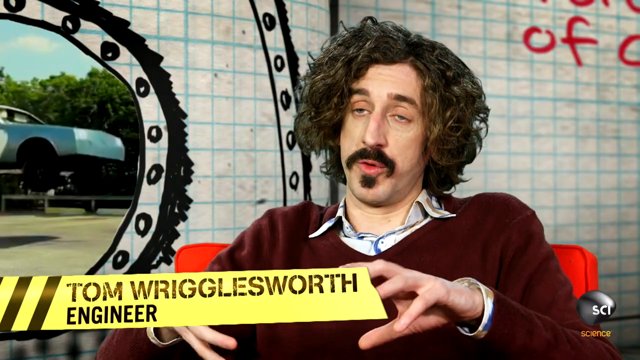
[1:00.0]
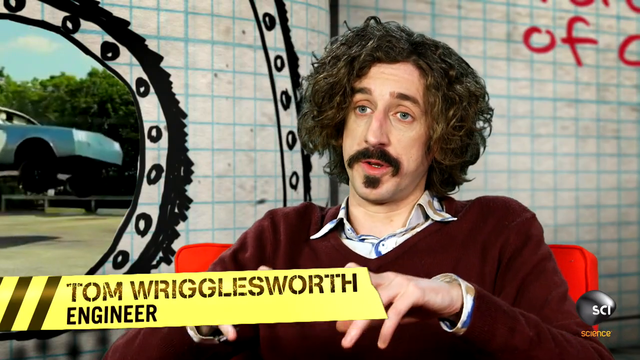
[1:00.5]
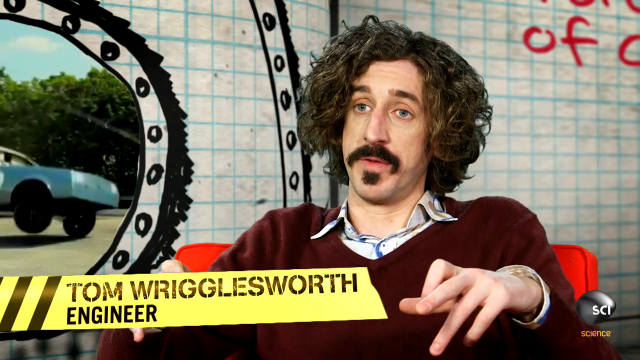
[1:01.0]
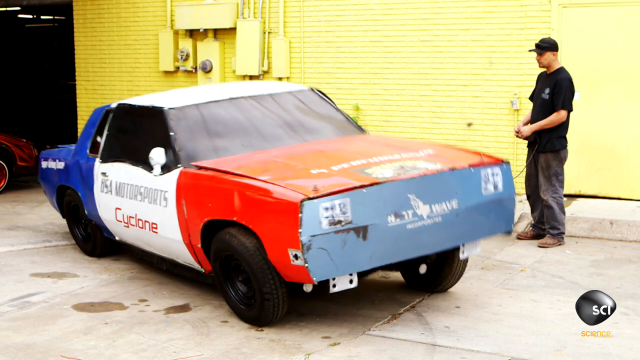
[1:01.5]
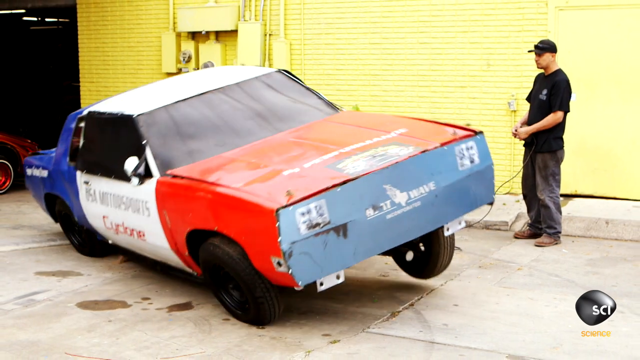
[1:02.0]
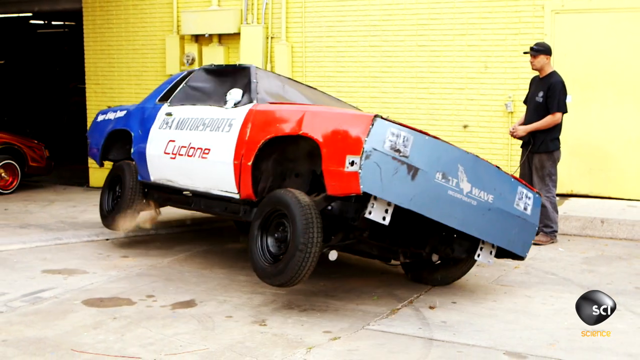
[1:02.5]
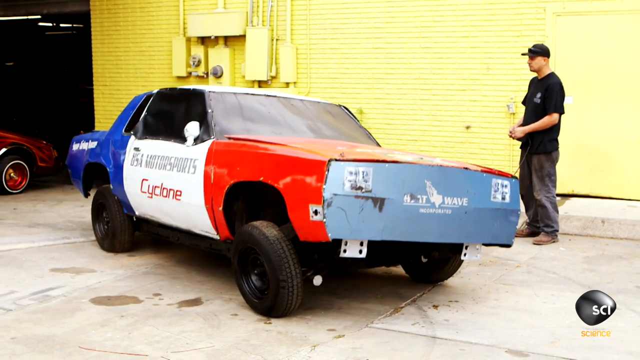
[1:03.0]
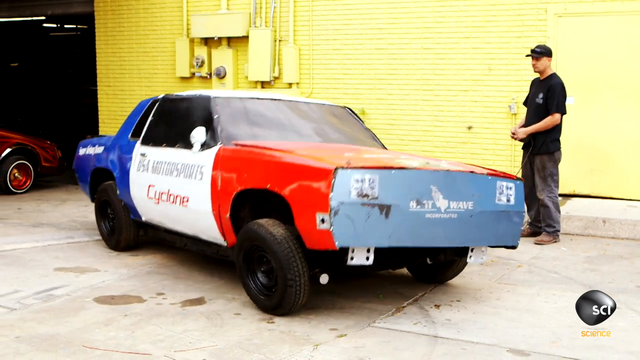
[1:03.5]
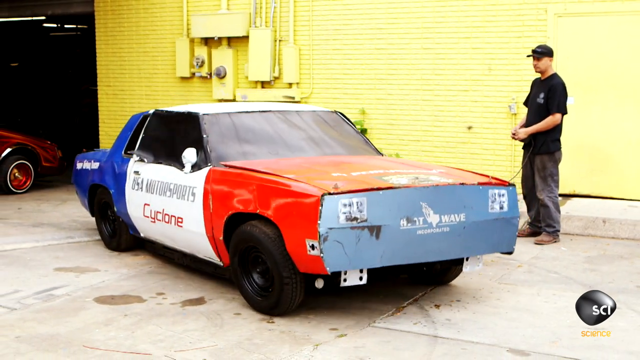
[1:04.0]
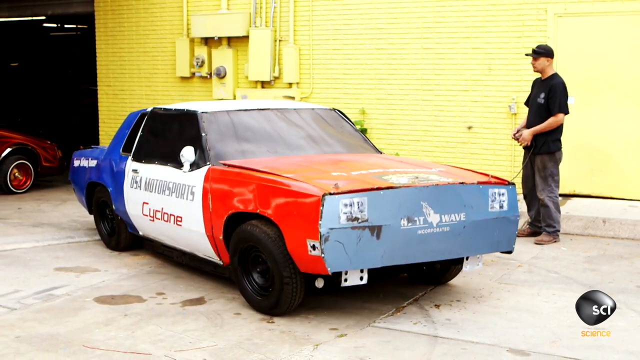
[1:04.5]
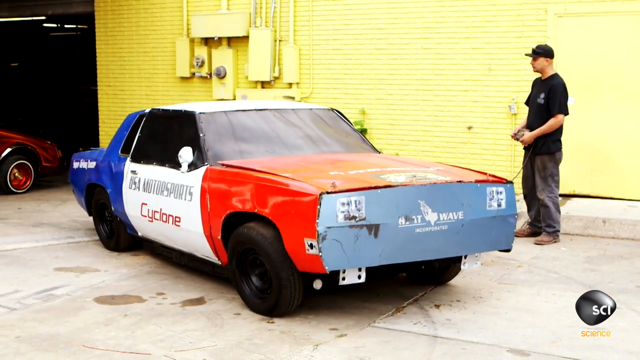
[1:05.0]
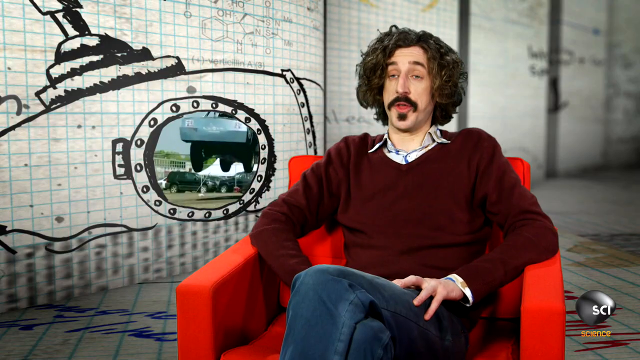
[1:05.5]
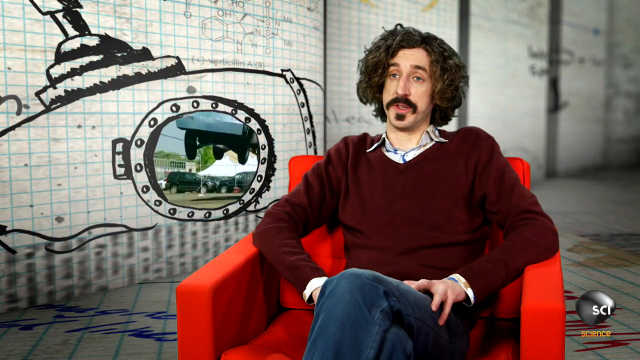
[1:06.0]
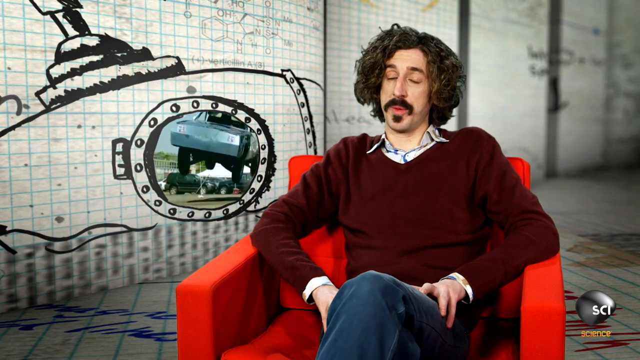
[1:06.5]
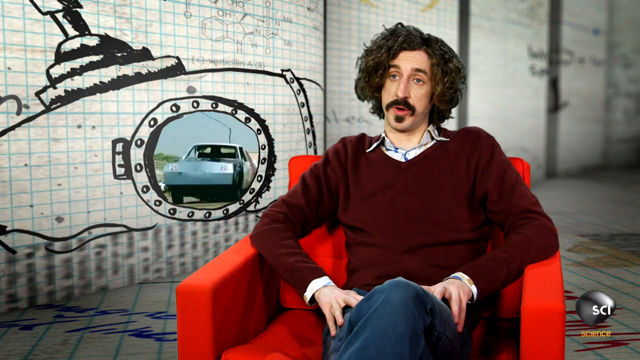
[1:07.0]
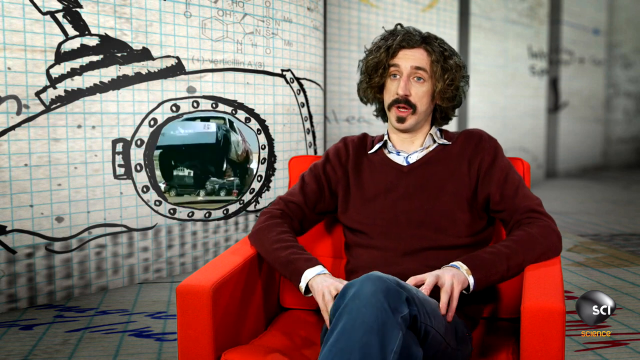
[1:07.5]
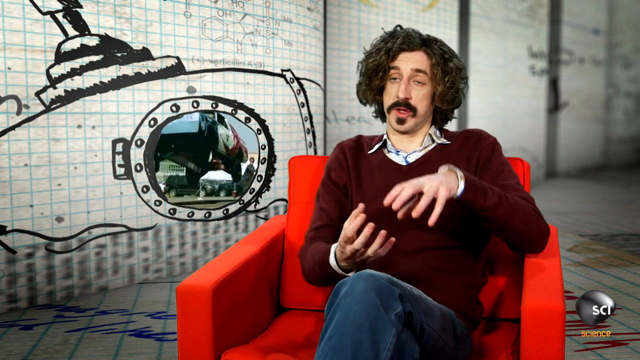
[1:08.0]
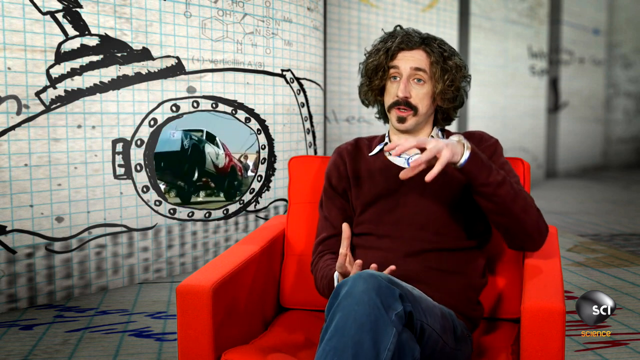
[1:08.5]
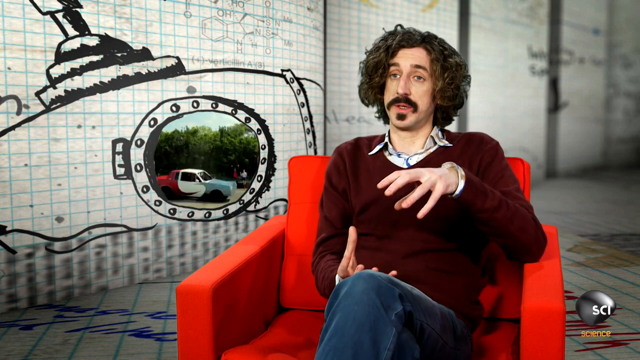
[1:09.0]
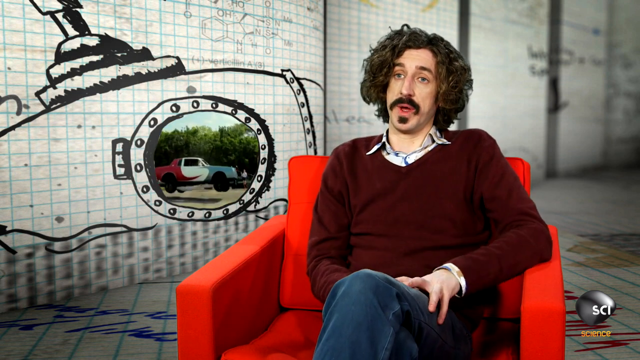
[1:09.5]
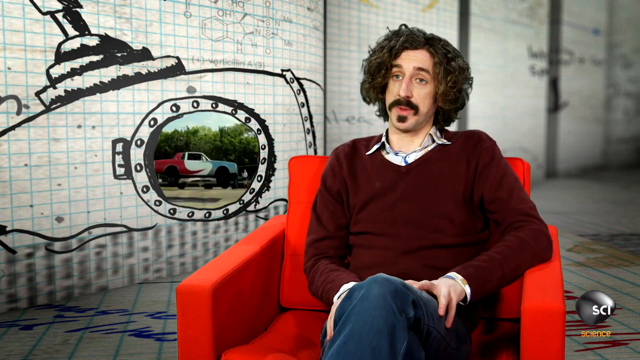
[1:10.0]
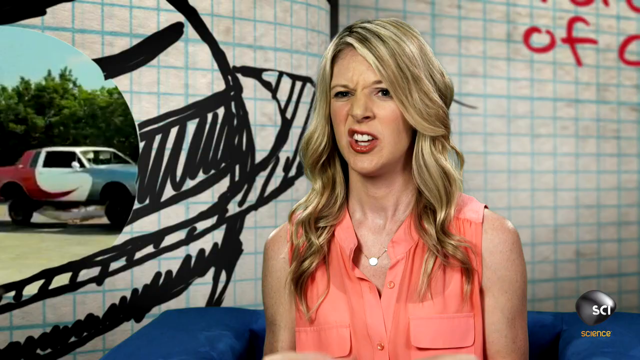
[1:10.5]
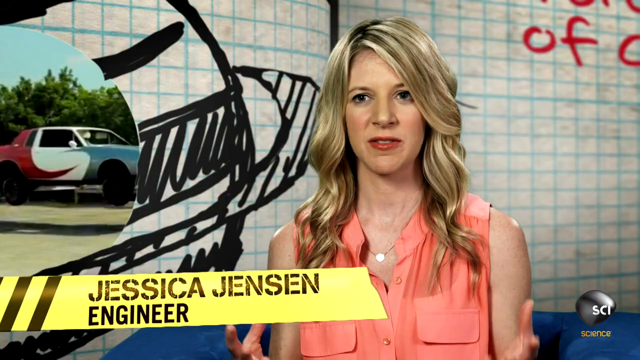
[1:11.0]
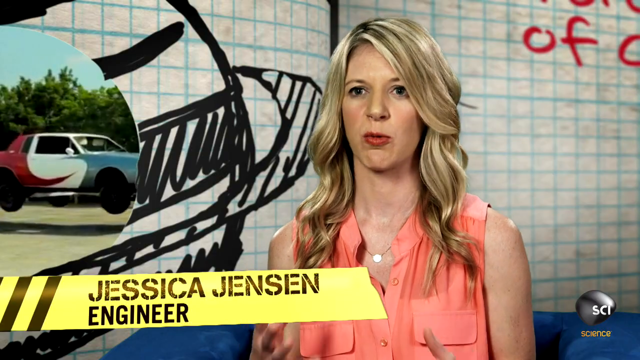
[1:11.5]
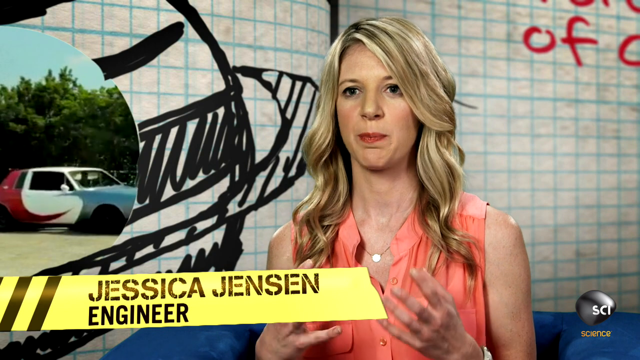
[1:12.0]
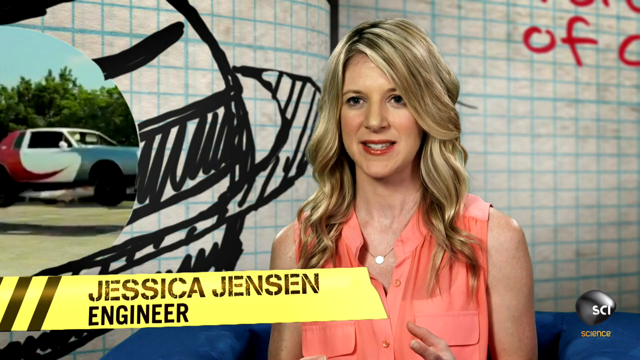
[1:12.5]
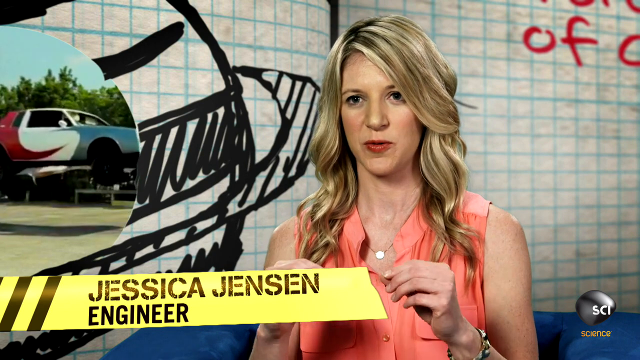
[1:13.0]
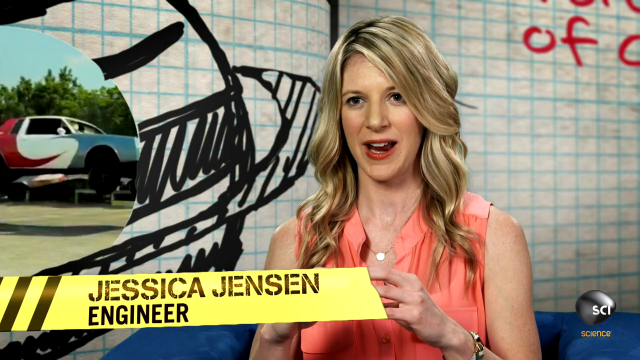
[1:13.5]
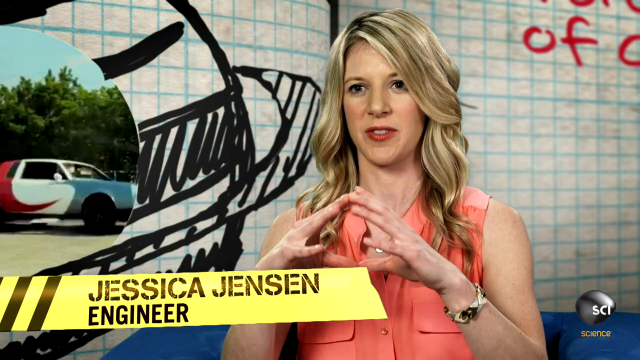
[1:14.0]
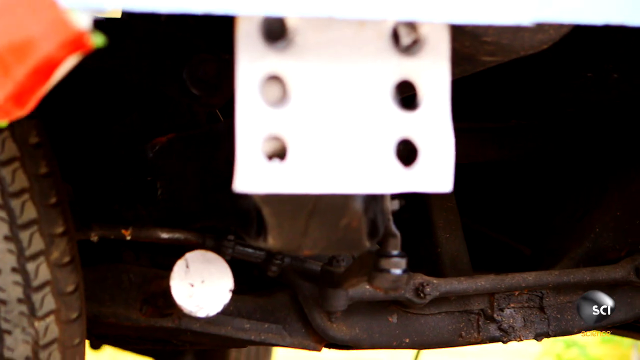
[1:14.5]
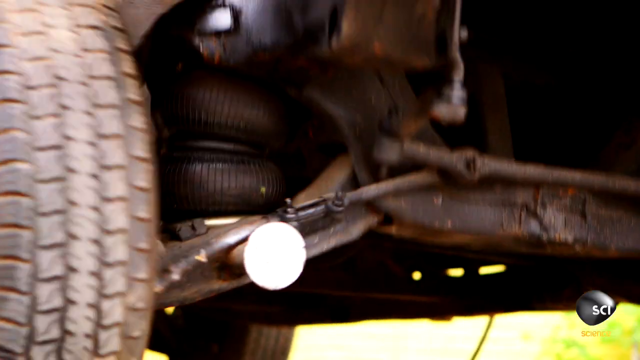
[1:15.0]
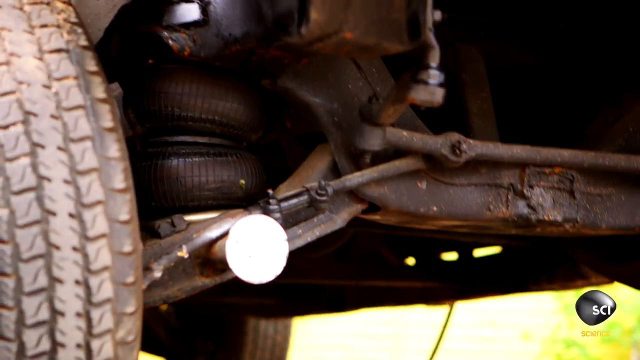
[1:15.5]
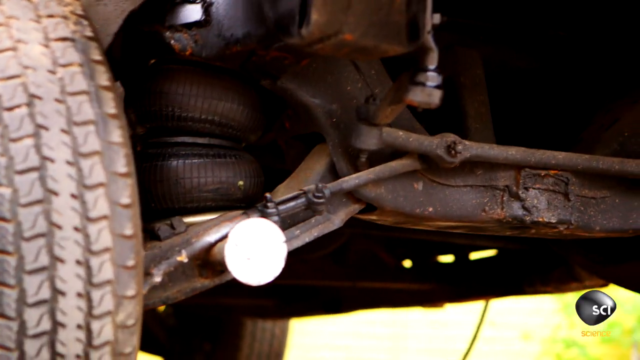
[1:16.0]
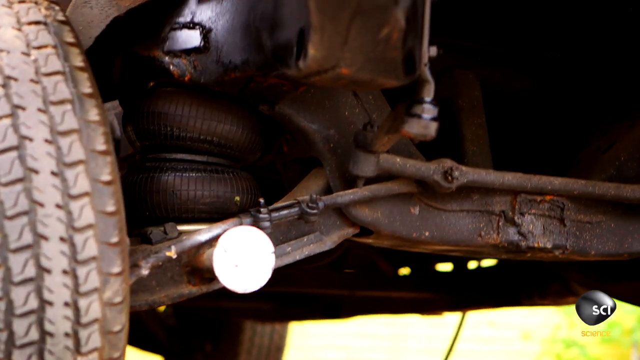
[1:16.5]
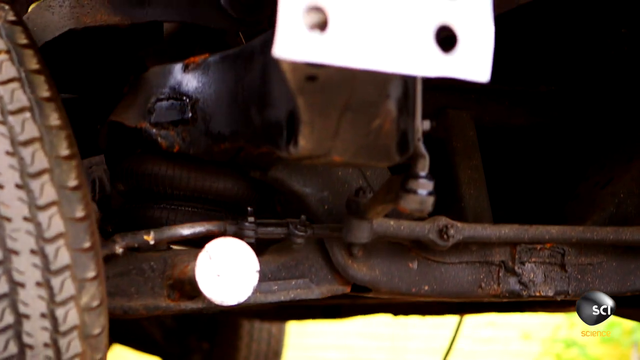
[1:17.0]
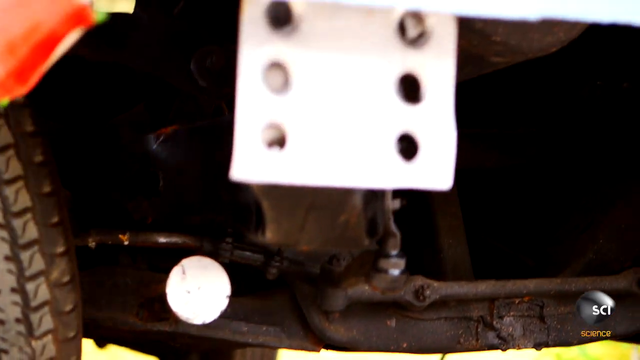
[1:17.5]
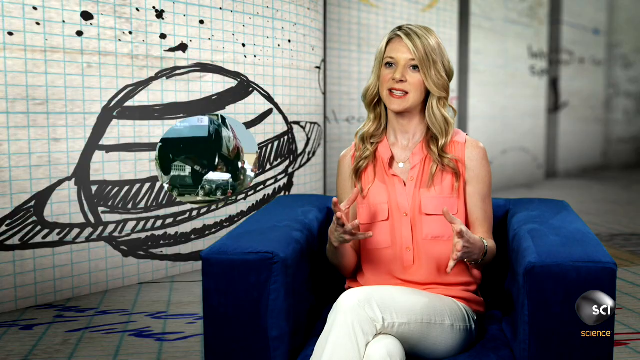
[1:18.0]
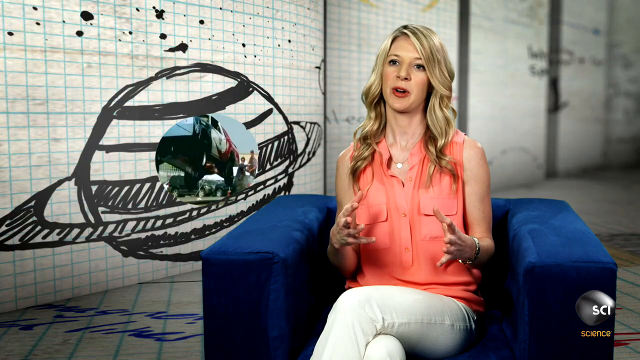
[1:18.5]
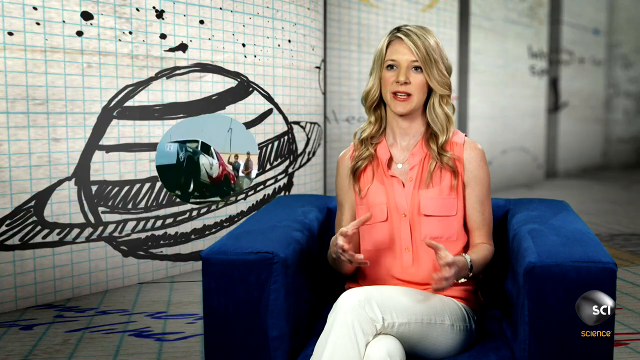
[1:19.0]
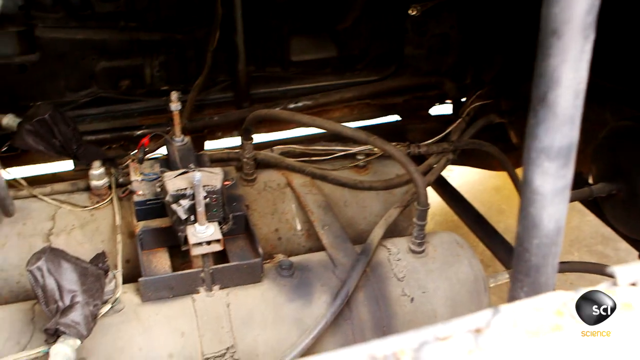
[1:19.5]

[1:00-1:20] Tom Wriglesworth appears to be giving some indication of how the car does what it does. The video cuts to the car with the man in the black baseball cap and black t-shirt, showing how the car can jump from side to side, from the wheels on the drive side to the offside, and then jump into the air. Tom gives further explanation, using hand gestures to indicate the car jumping up and down. The next shot shows a new engineer, Jessica Jensen, according to the yellow sign underneath. She has blonde hair slightly longer than shoulder length and wears a peach-coloured top, and a necklace is visible. She gives some sort of explanation, using her fingers and hand gestures. The video cuts to the car, showing the hydraulic suspension bouncing up and down as an indication of how it works. It cuts back to Jessica, who is sitting in a blue chair in the room with the white walls, giving more explanation. There is a quick shot of the engine, and then the video cuts back to Tom Wriglesworth.